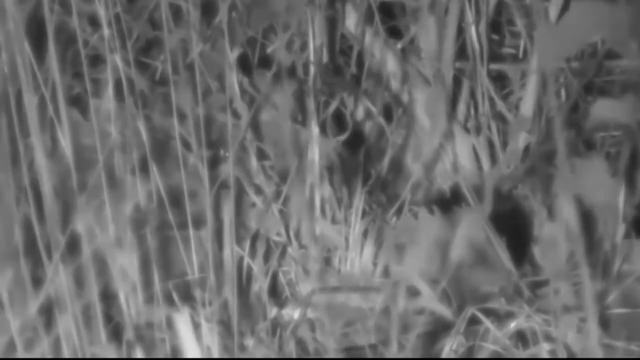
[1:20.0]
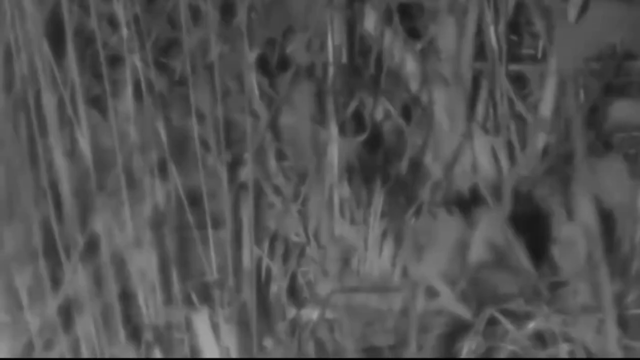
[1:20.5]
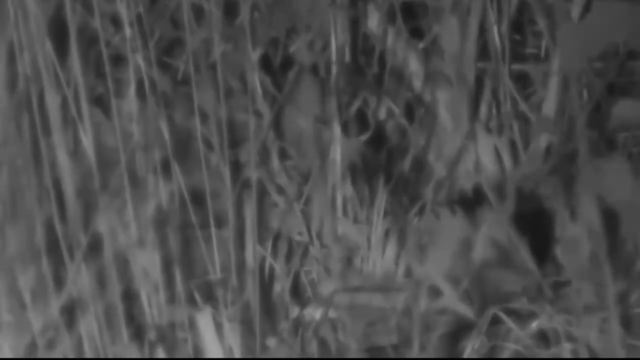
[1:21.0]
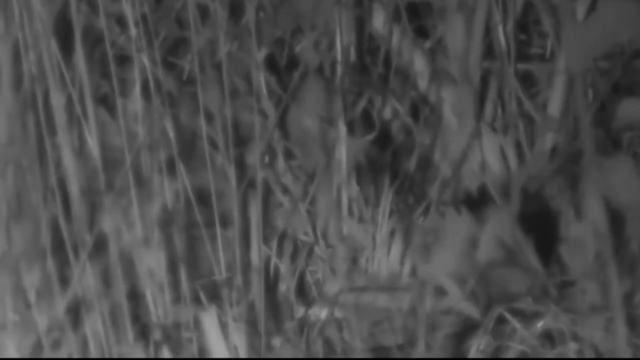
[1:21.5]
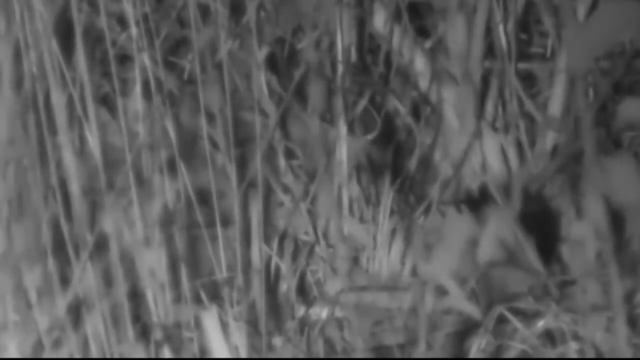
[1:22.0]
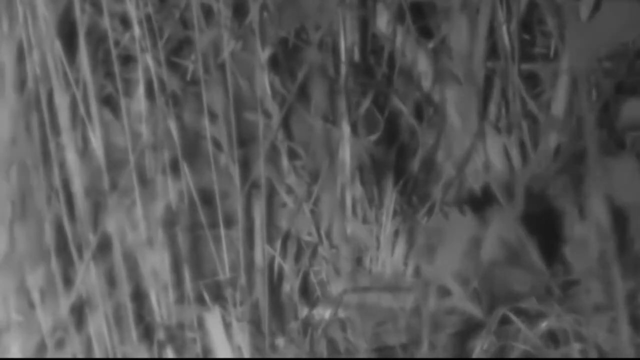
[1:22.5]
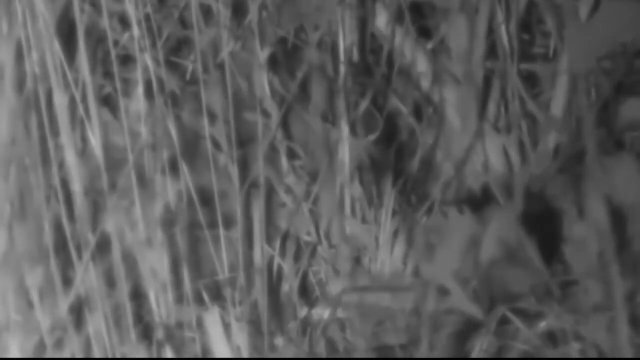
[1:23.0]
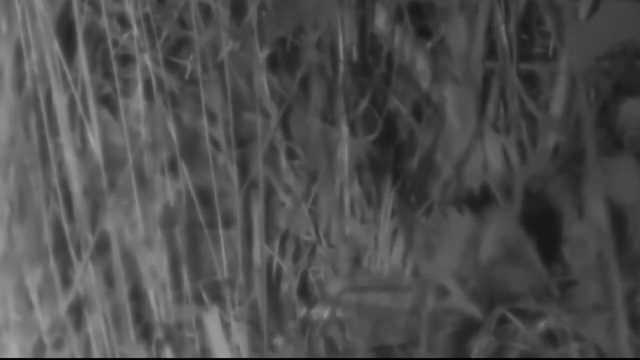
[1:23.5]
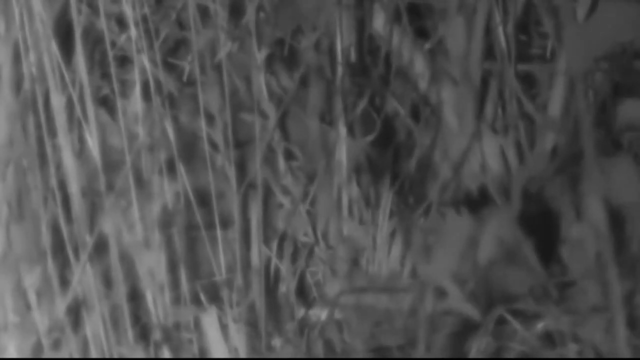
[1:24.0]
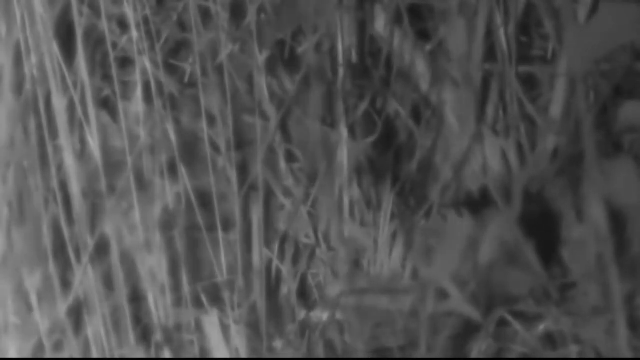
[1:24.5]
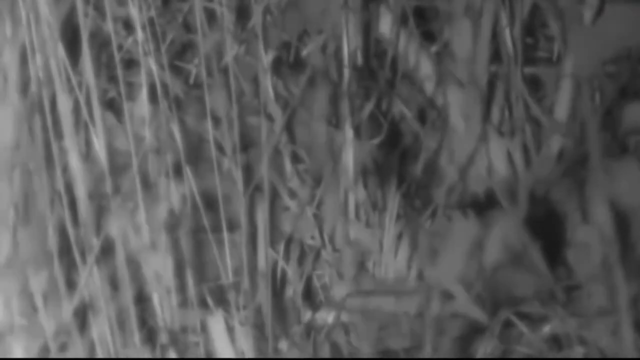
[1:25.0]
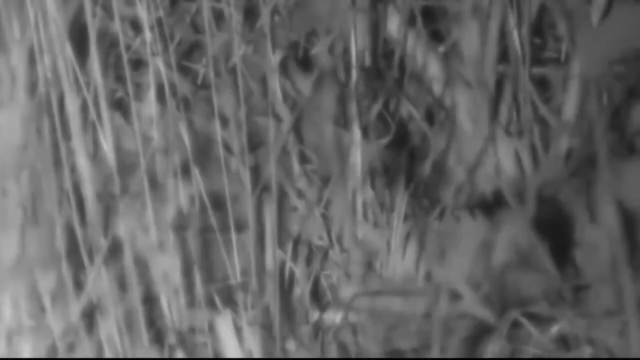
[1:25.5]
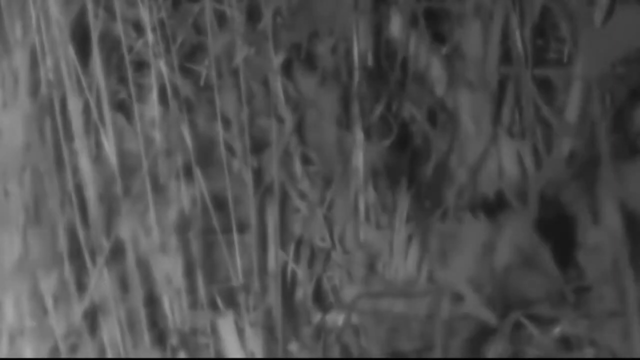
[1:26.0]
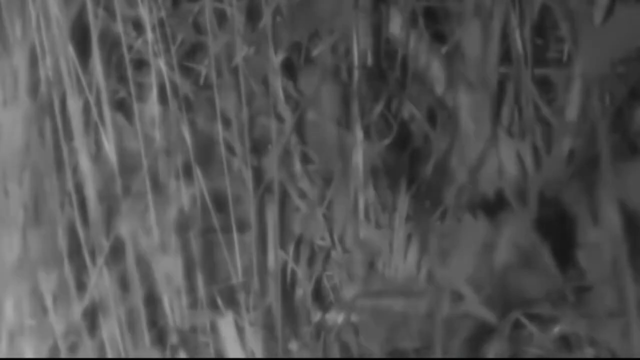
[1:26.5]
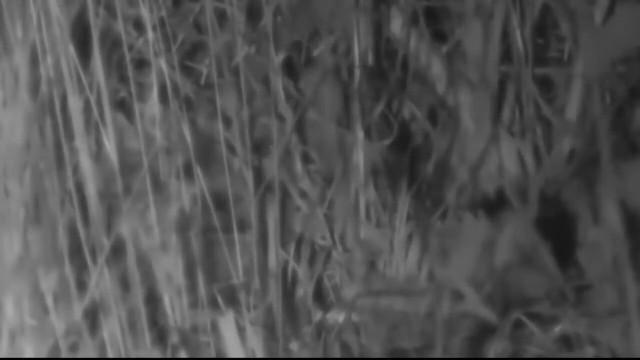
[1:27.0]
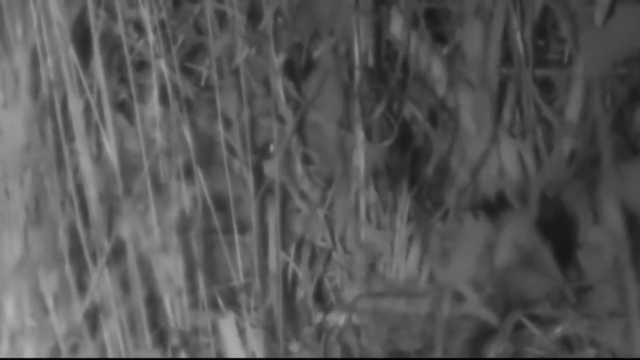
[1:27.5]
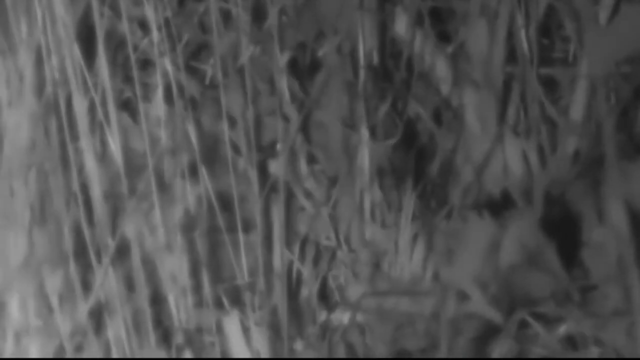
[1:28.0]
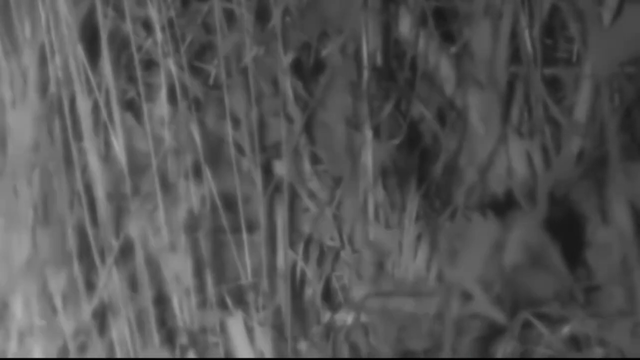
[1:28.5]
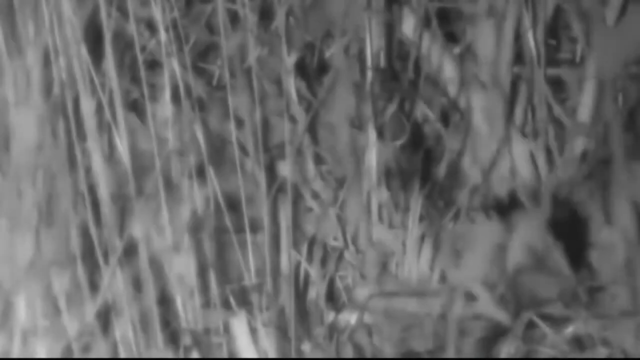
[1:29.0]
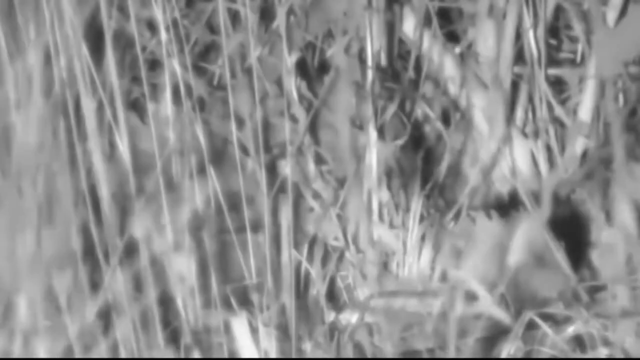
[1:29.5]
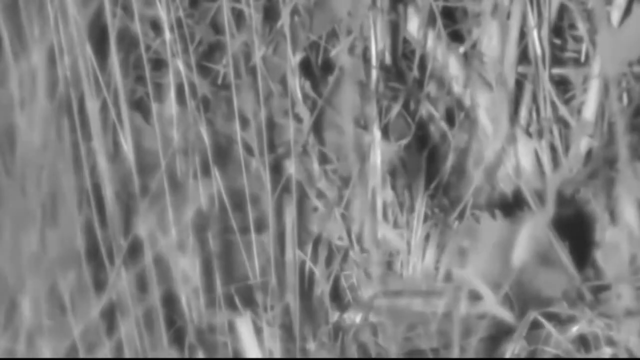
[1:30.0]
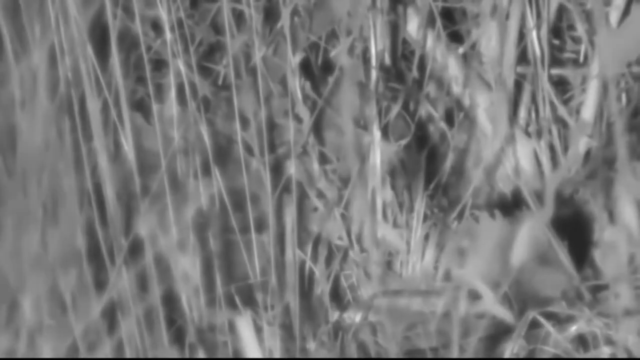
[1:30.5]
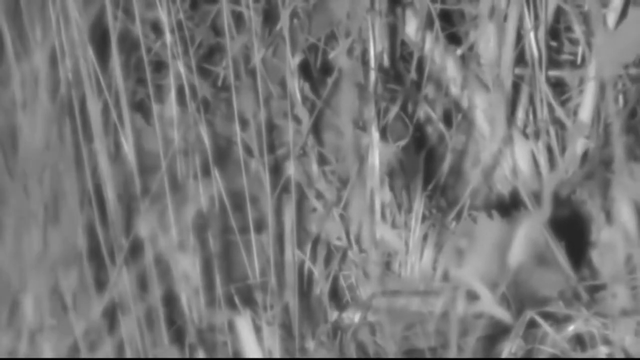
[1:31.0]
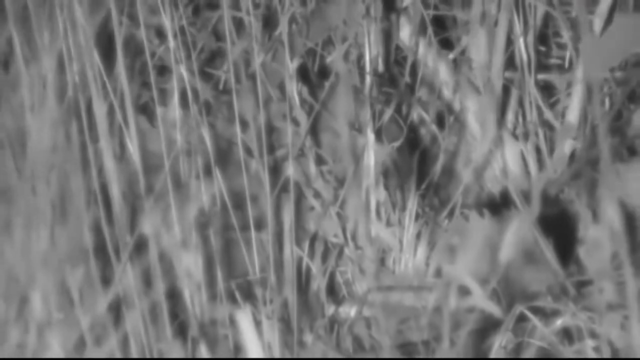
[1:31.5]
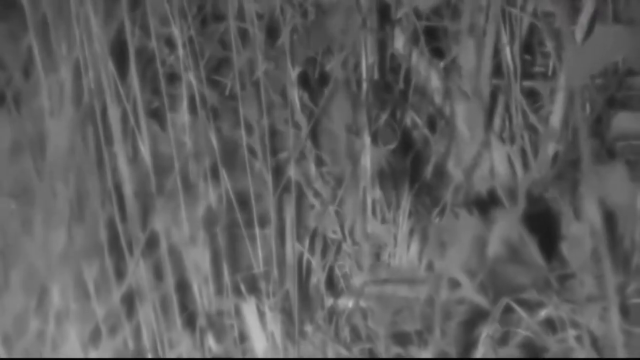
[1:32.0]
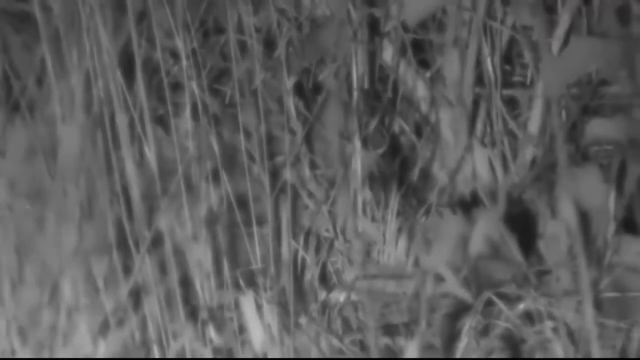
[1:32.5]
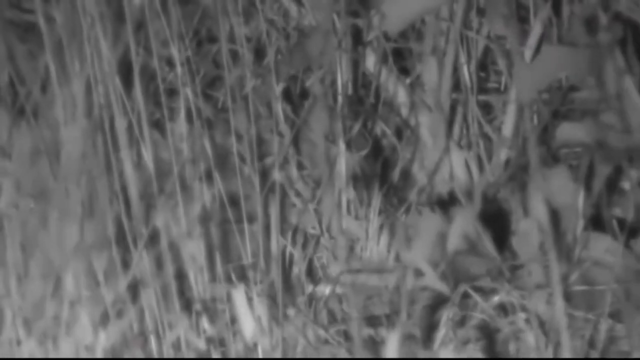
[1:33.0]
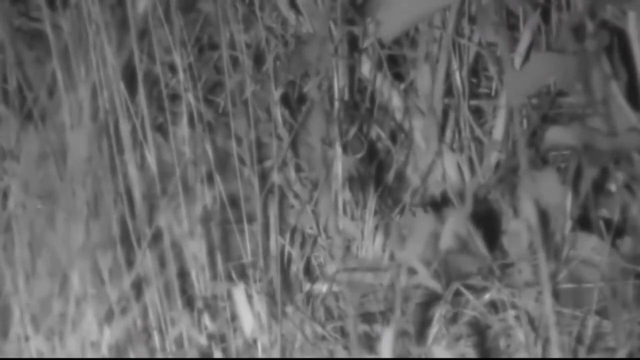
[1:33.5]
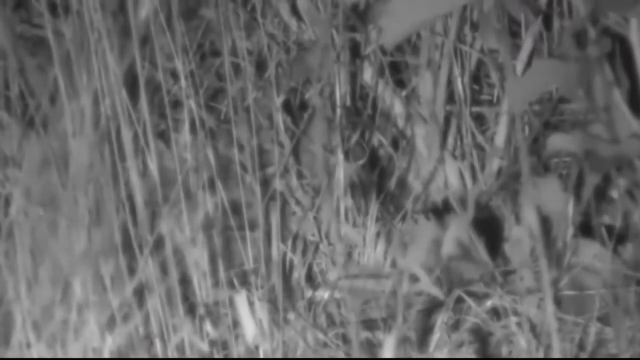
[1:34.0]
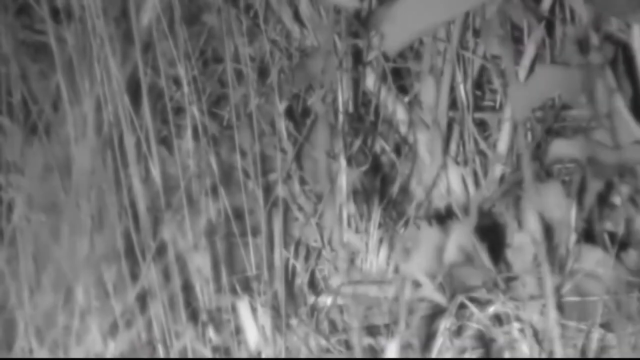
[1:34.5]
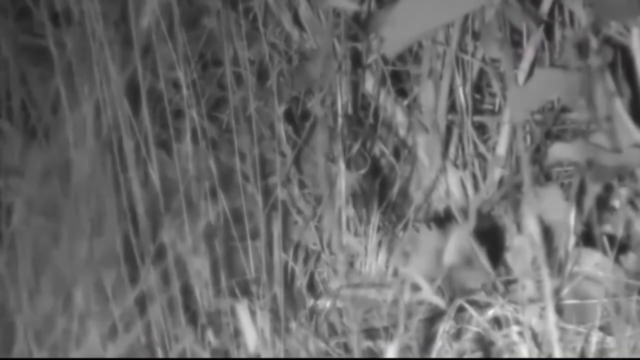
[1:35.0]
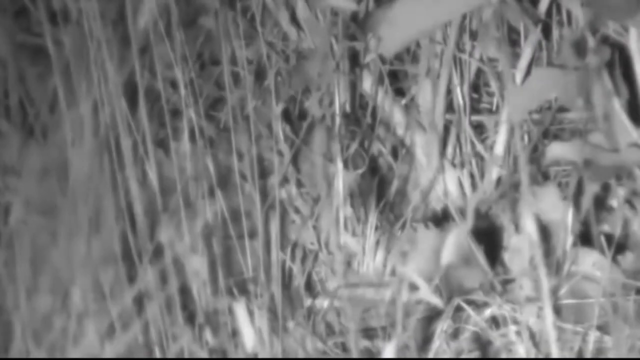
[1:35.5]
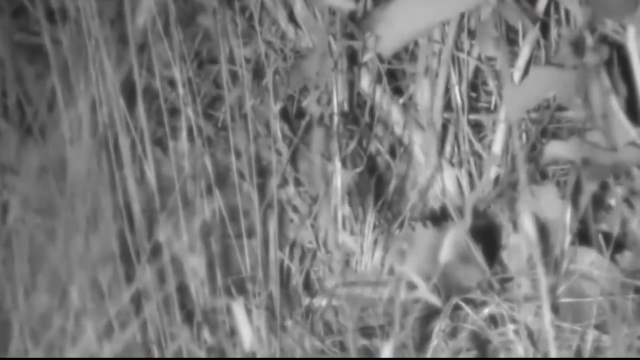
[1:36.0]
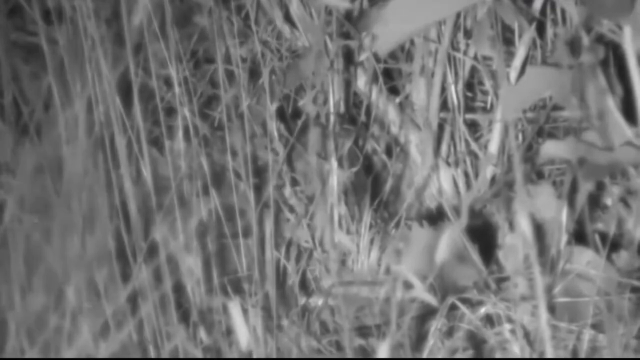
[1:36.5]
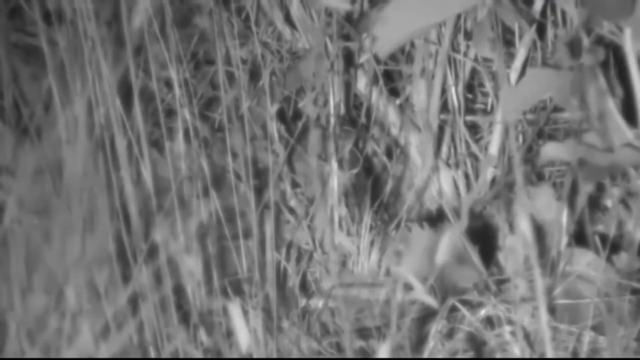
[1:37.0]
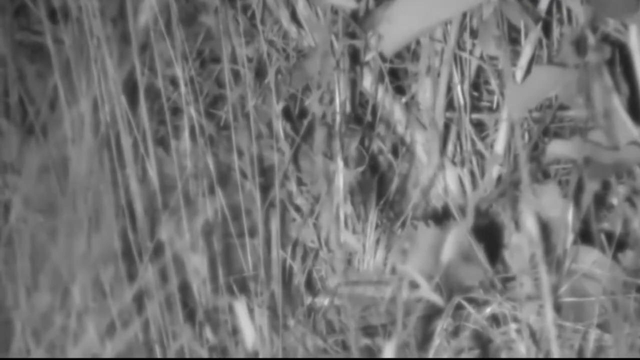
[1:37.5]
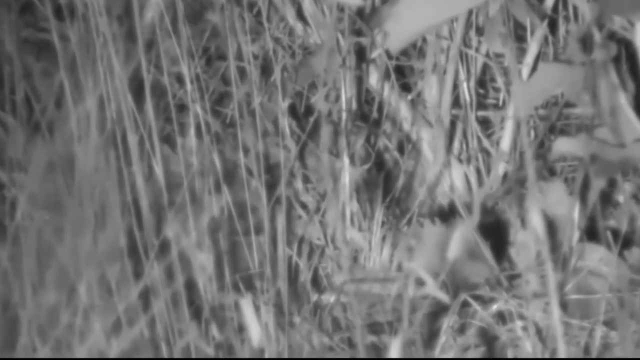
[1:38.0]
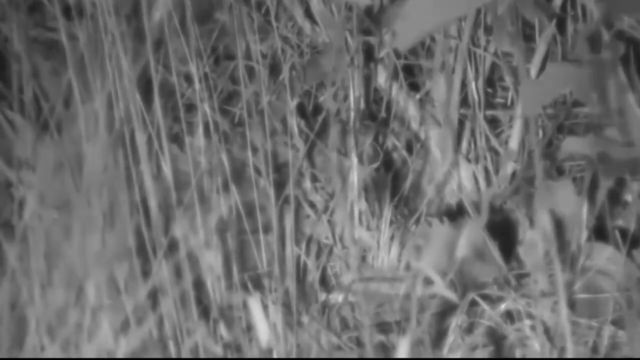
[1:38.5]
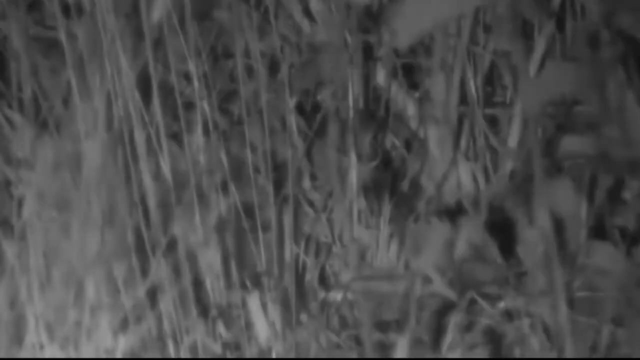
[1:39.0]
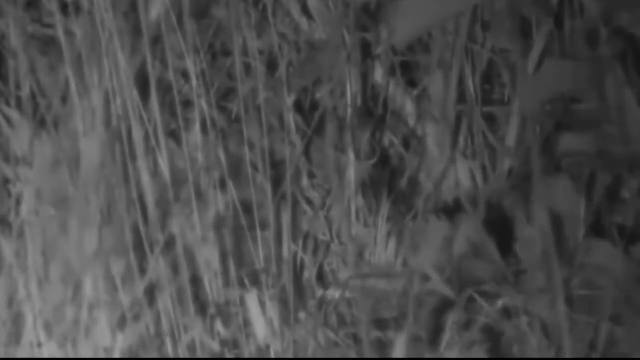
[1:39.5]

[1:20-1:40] Very little is visible, and the cat can no longer be seen at all. The strange faces are still there. There is a little bit of movement in the background, behind the grass, very well hidden; what had seemed to be a black cat face is now uncertain. It looks like it is maybe turning around to go to the left. The face on the right is a person with their tongue hanging out, and above him is what looks like some kind of weird monster looking for a window.